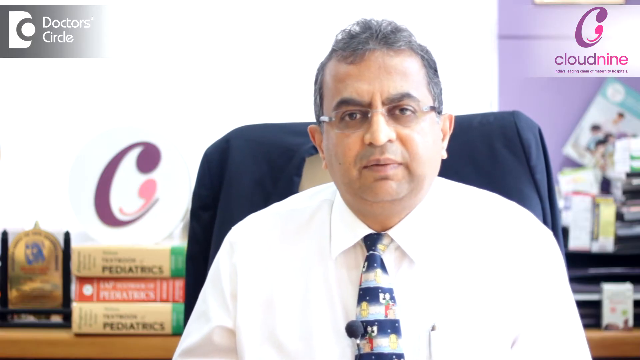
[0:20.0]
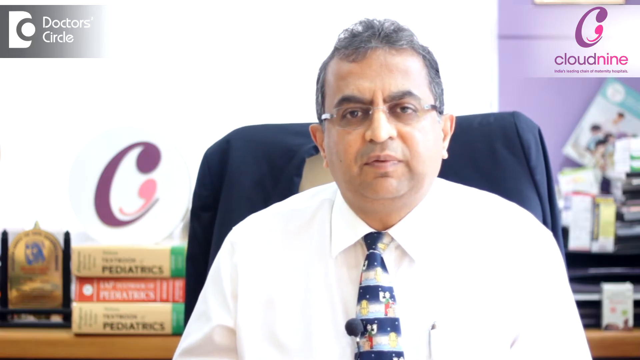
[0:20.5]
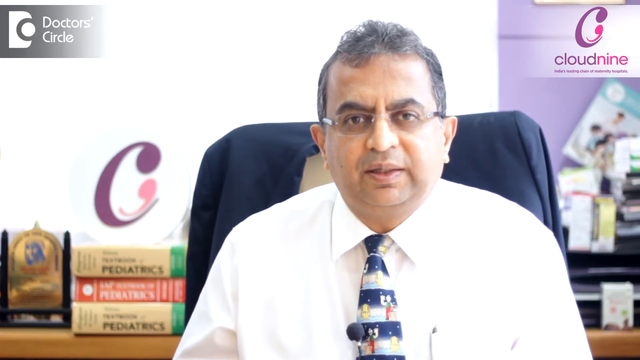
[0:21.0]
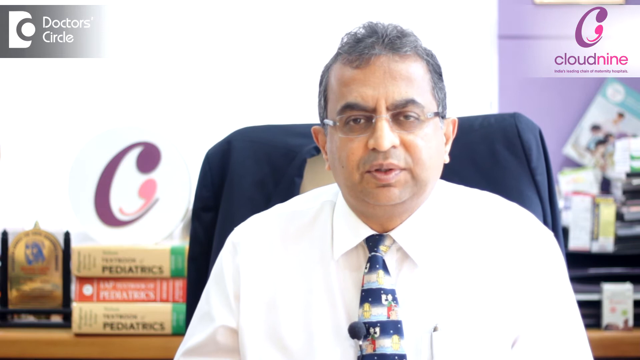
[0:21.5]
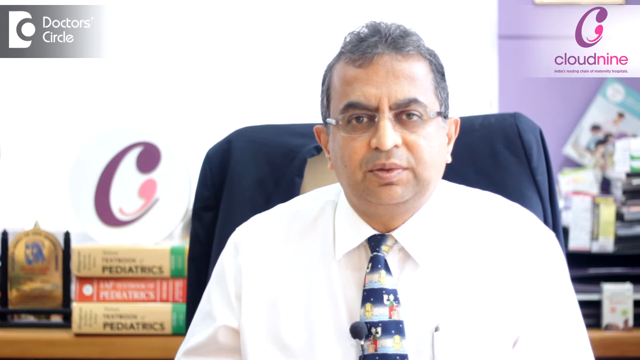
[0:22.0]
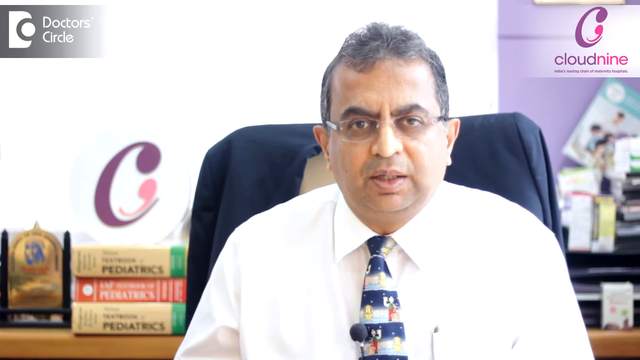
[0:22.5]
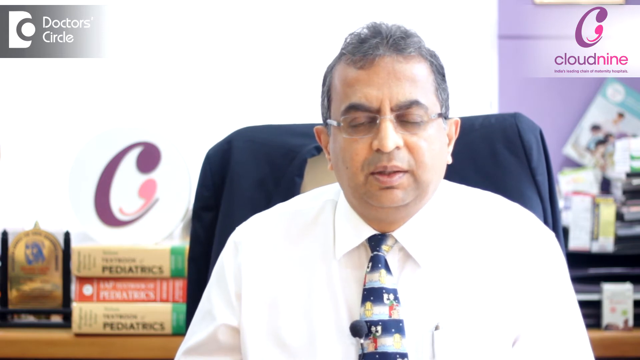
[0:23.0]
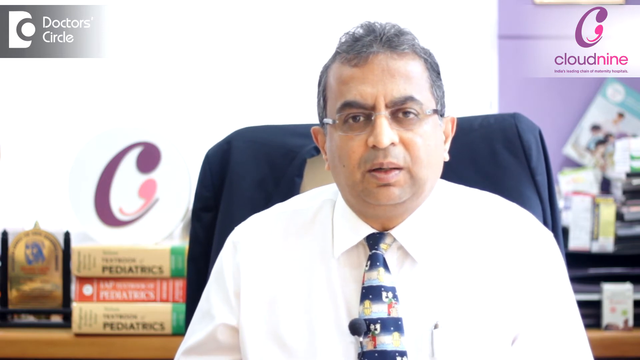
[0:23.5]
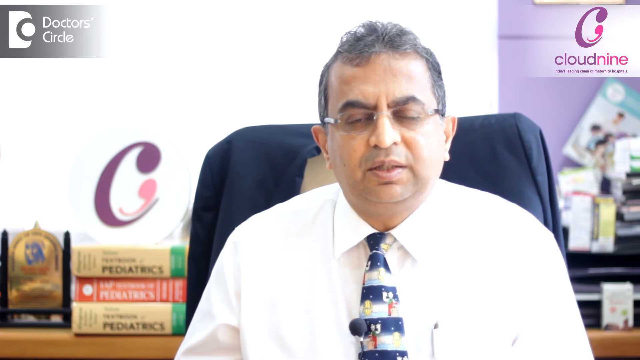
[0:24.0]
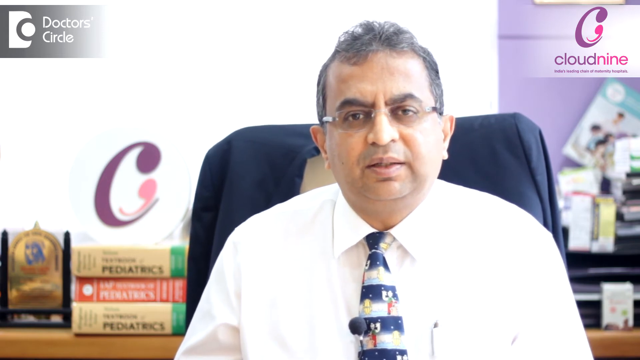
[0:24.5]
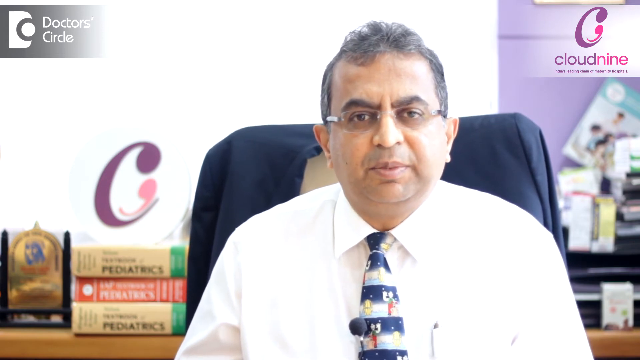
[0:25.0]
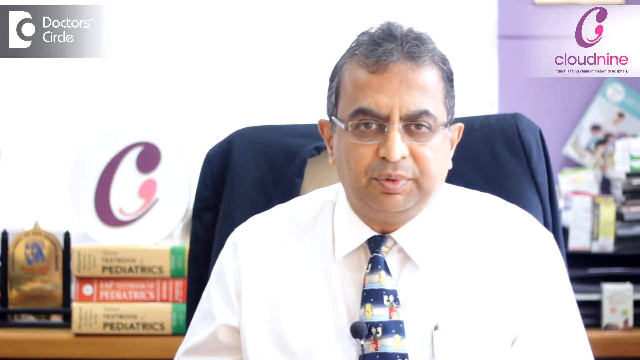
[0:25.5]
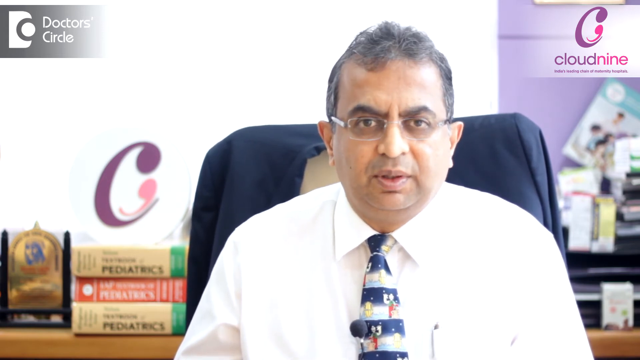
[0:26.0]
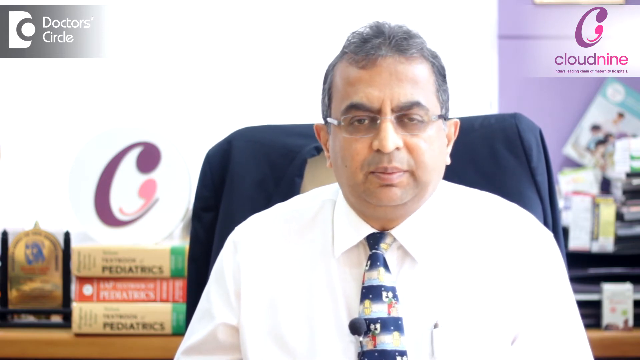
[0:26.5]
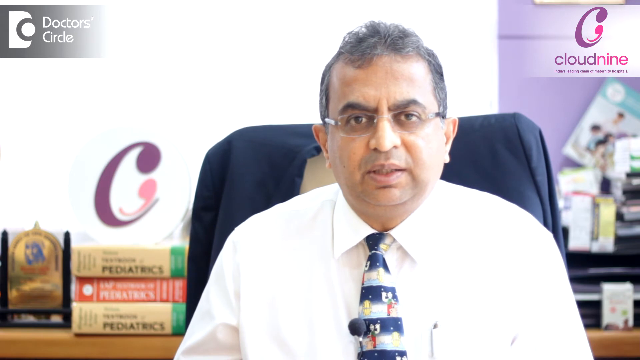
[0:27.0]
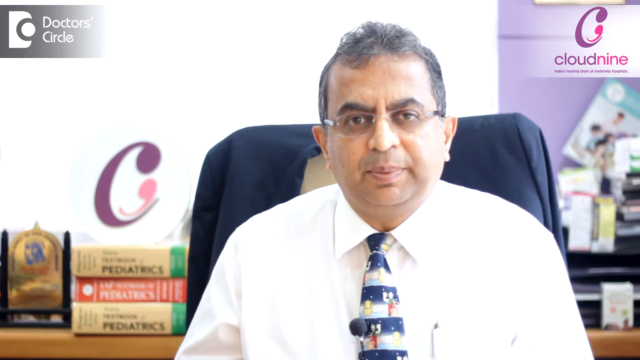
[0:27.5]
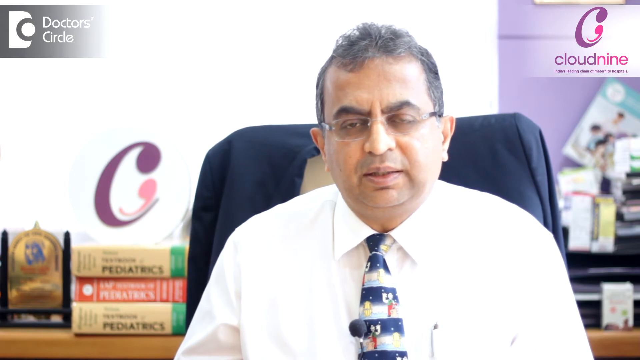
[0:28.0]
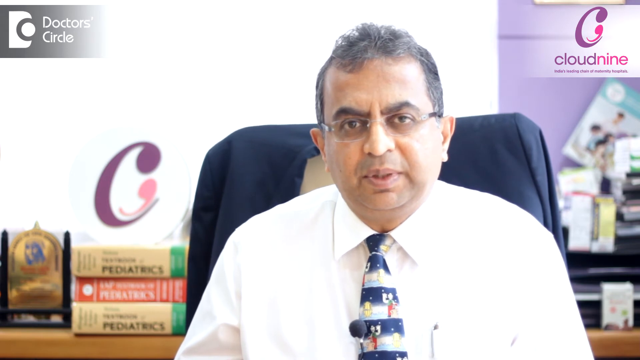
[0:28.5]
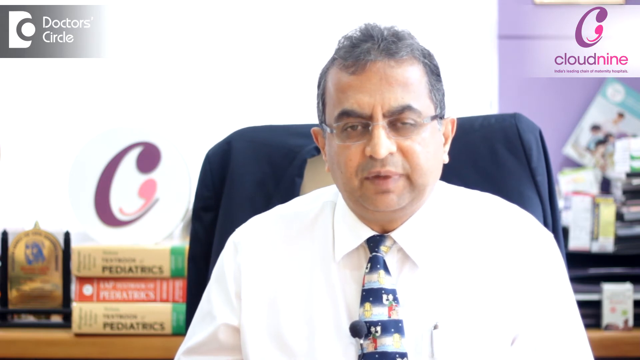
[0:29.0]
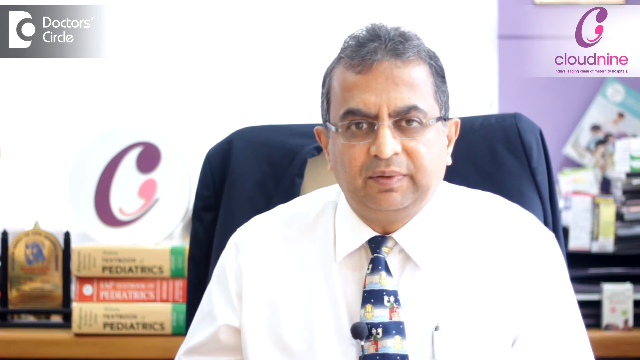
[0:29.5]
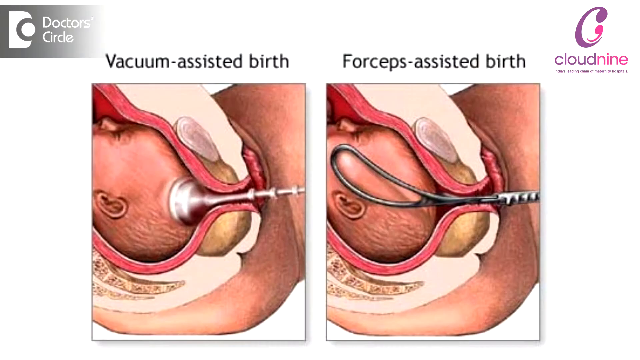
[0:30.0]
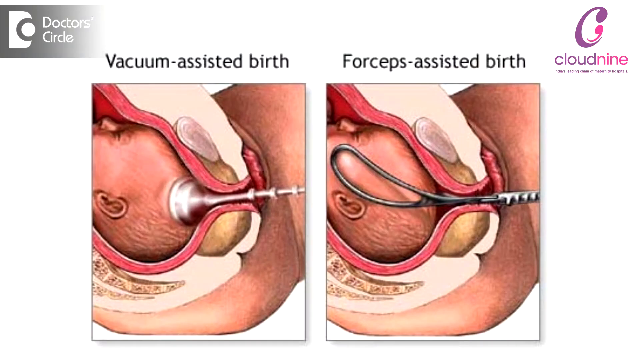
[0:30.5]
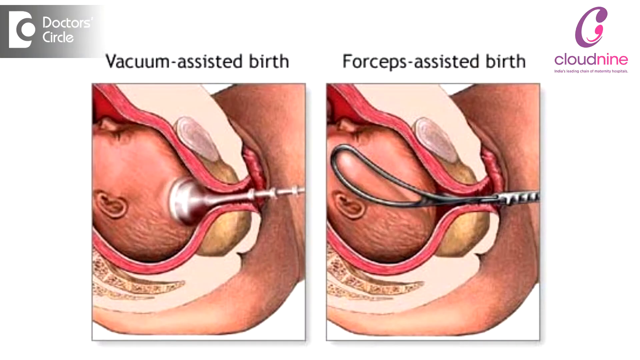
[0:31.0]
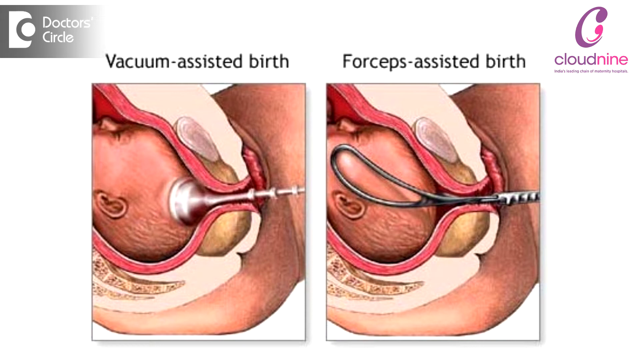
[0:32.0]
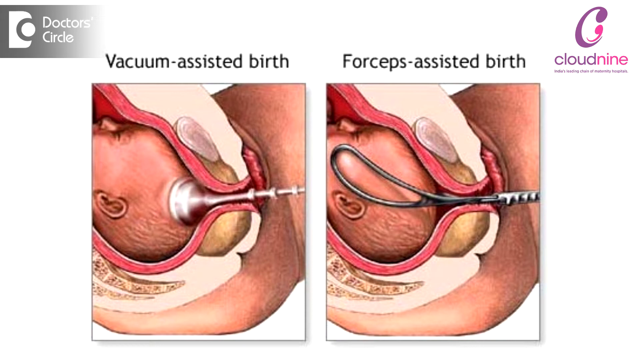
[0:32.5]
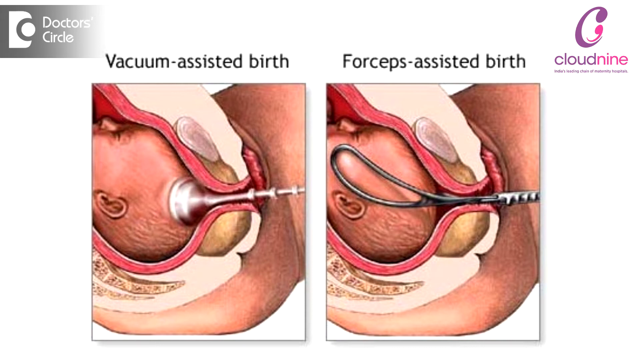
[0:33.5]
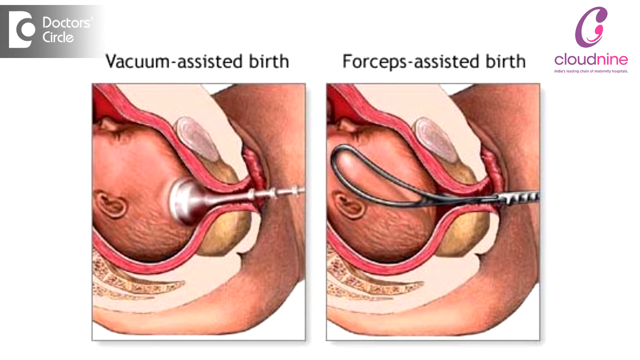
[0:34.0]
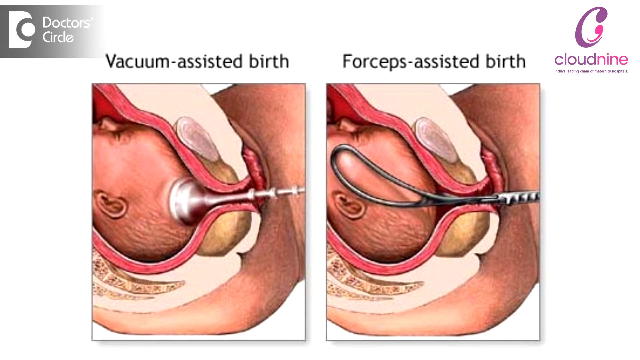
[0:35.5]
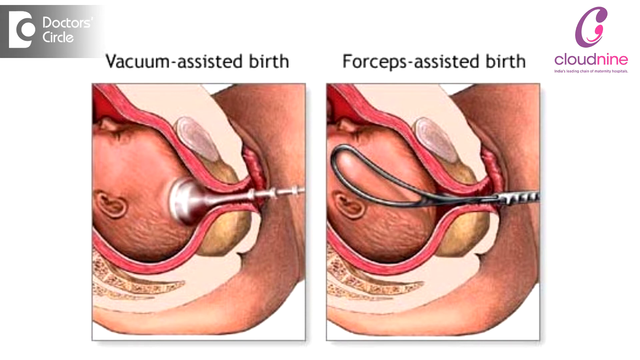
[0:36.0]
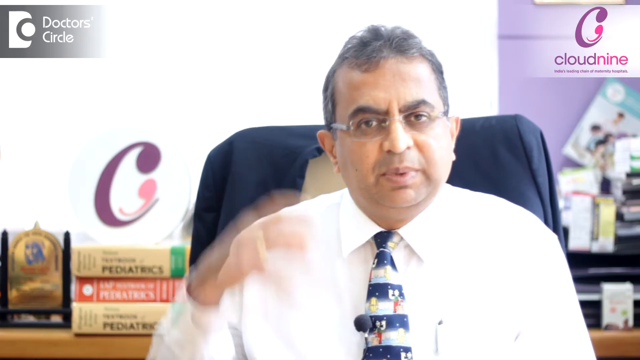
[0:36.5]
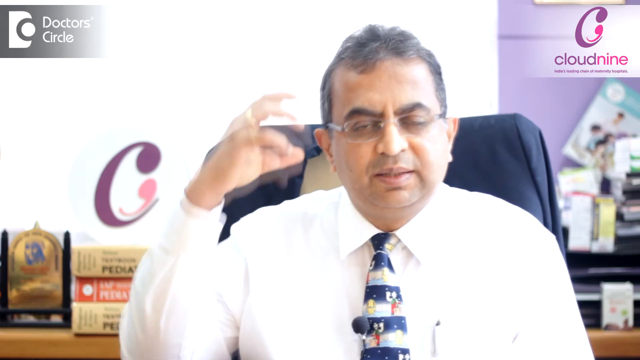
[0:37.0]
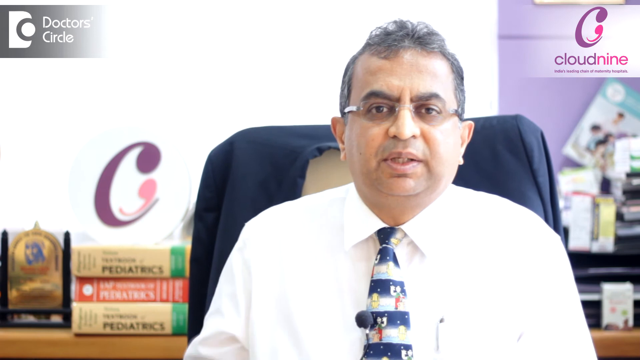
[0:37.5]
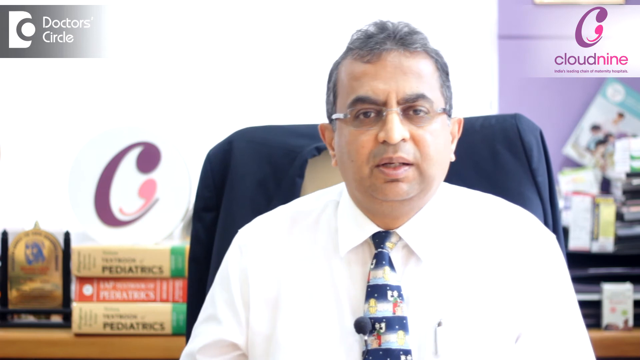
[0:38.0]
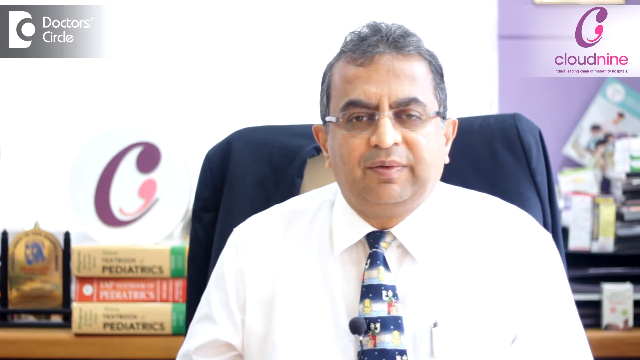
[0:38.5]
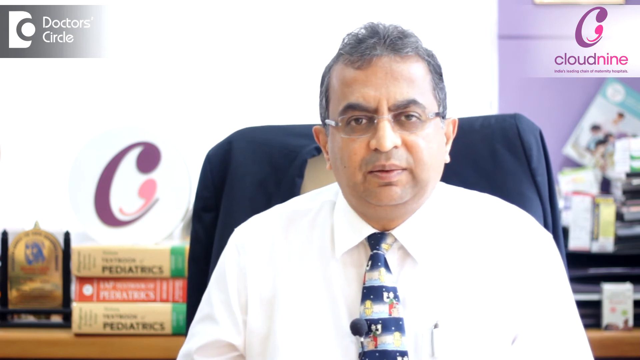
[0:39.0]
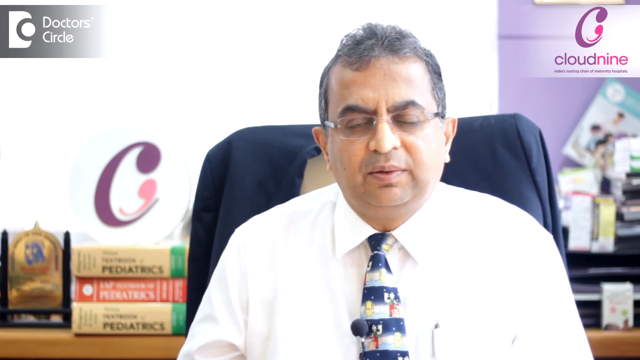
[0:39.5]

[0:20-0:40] A purple and pink logo for an organization called cloud nine is at the top on the right, and a gray and white Doctor's Circle logo is on the left; both stay put. In the background on the left are a purple C, some books, and what looks like some sort of award on a desk. On the right is what looks like an Indian gentleman seated in a chair with his jacket over the back. He has glasses and wears a tie that looks like it has cartoon characters on it. He looks into the camera and speaks, with lots of blinking and some head movements. Graphics then appear toward the center of the screen, kind of like a medical illustration from a med book. On the left the text reads "vacuum assisted birth," with an illustration of a baby inside the mother's womb and a silver object attached to the top of the infant's head. On the right the text reads "forceps assisted birth," with the same illustration but a set of forceps around the infant's head. The video focuses on this for a second, then cuts back to the gentleman, who makes a hand motion while looking into the camera.